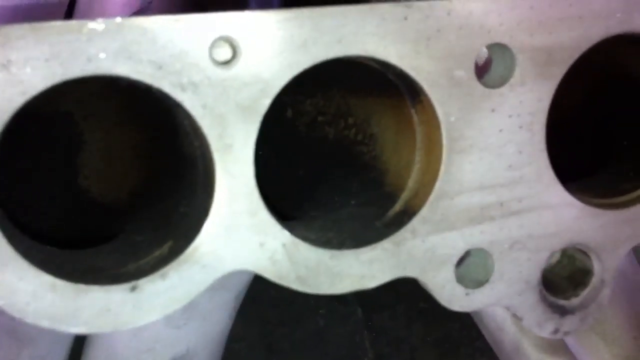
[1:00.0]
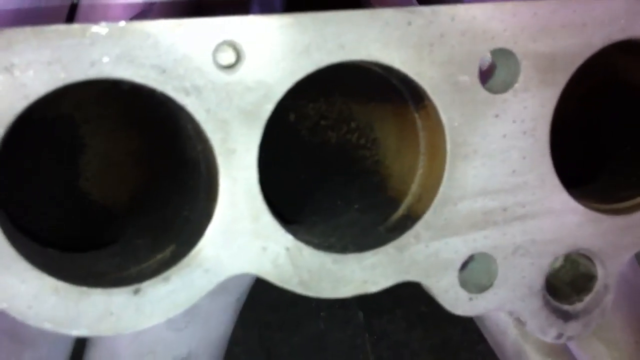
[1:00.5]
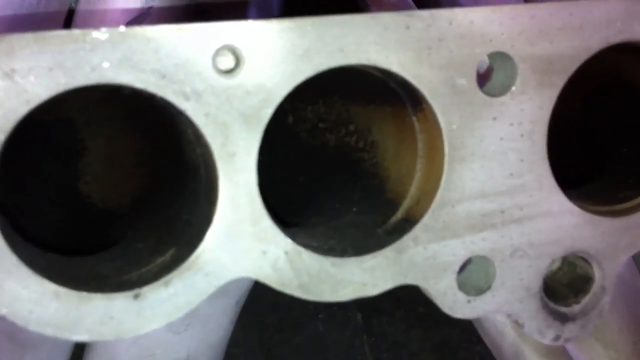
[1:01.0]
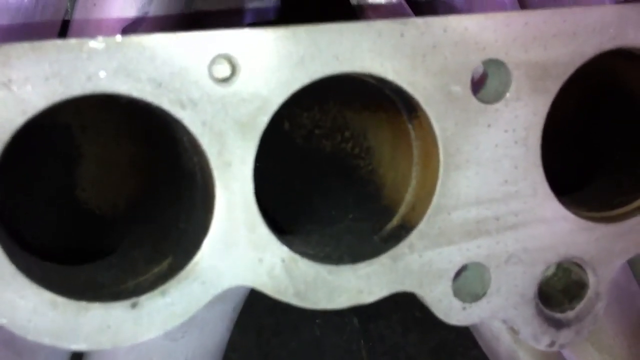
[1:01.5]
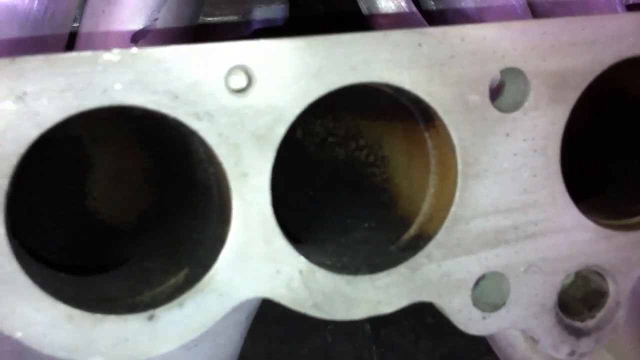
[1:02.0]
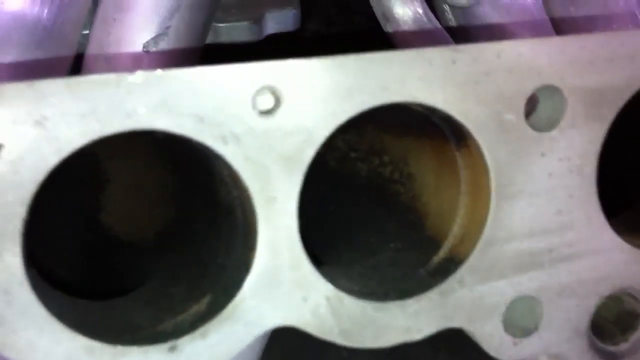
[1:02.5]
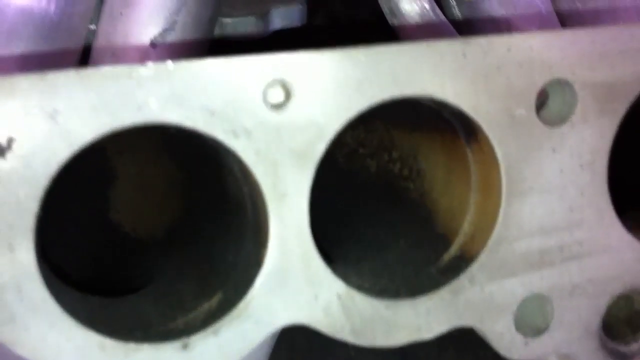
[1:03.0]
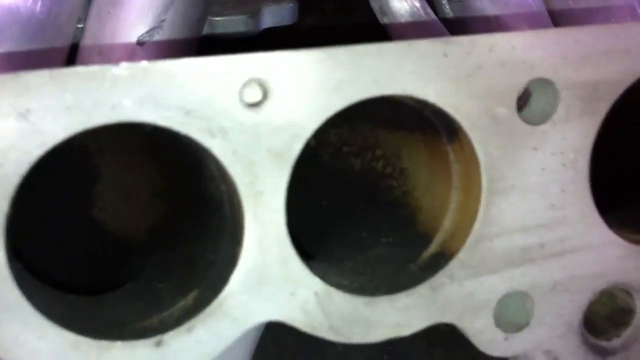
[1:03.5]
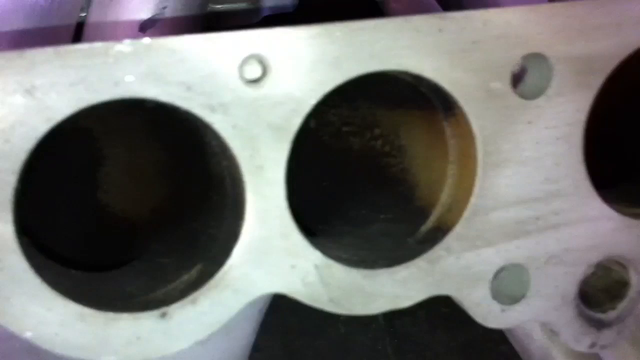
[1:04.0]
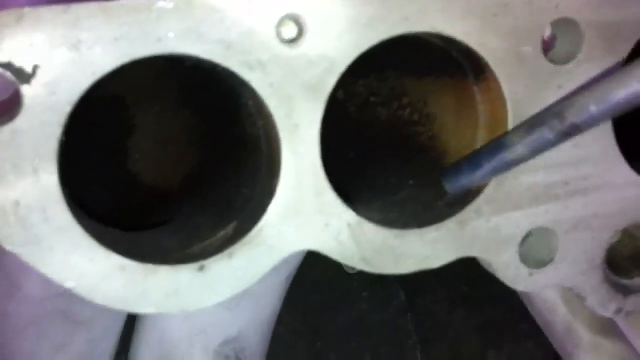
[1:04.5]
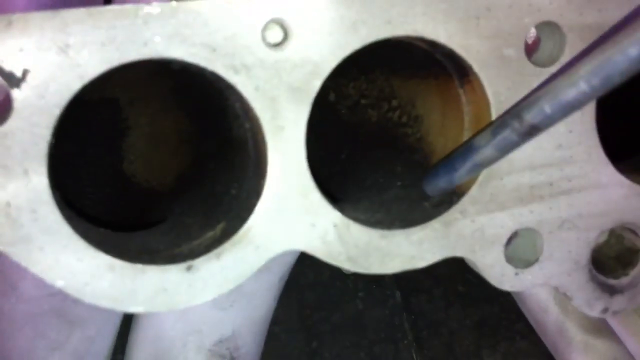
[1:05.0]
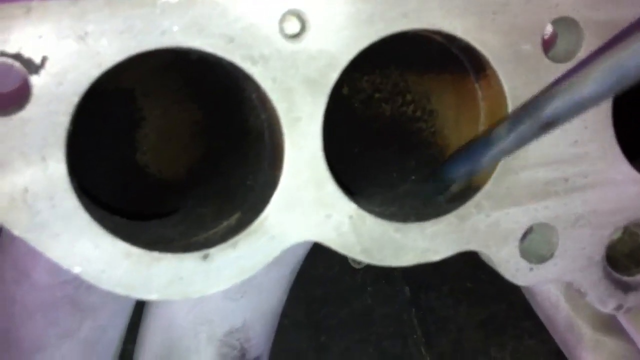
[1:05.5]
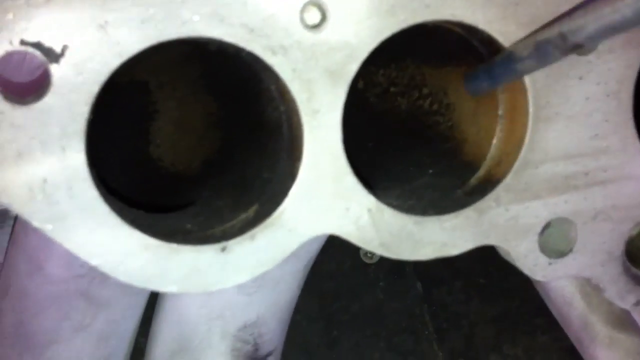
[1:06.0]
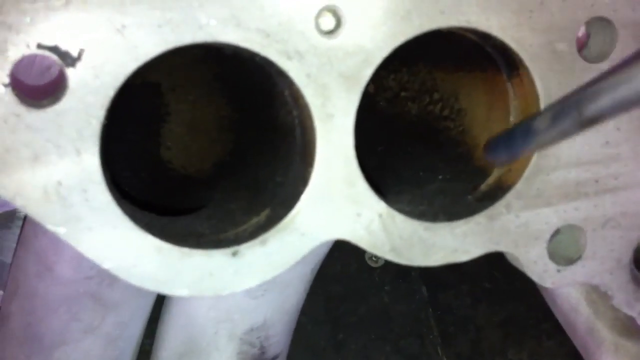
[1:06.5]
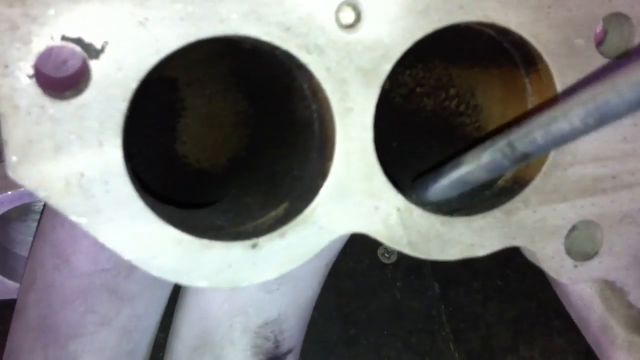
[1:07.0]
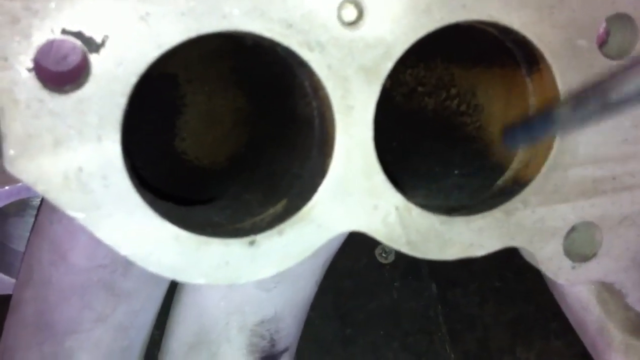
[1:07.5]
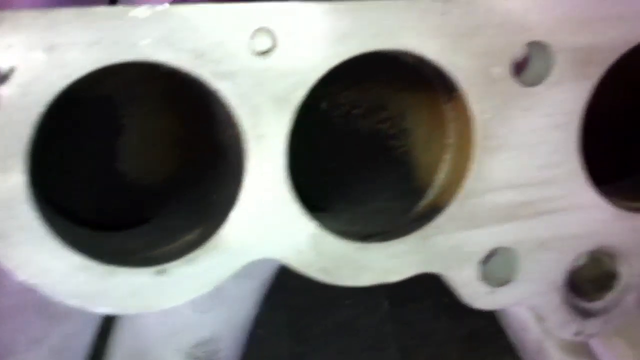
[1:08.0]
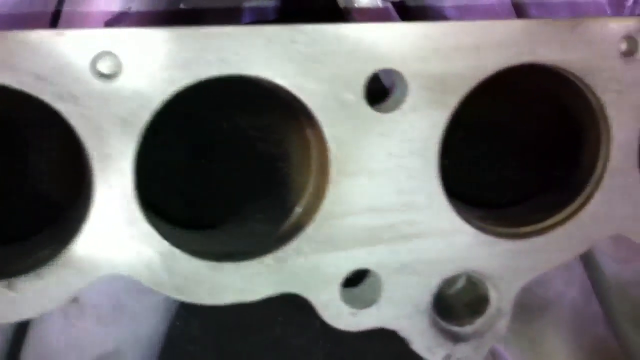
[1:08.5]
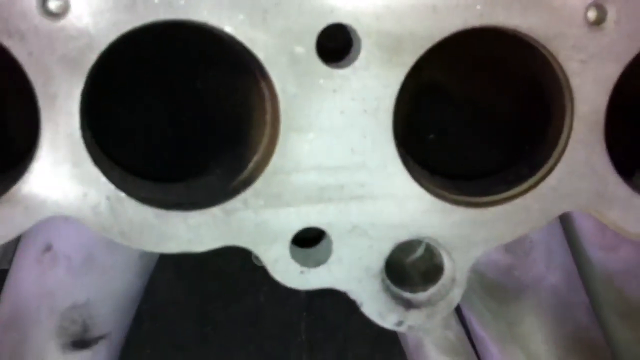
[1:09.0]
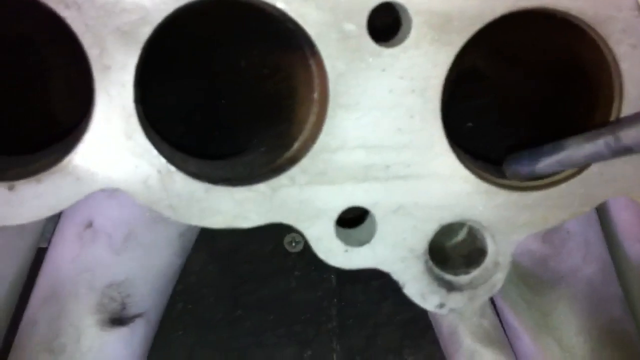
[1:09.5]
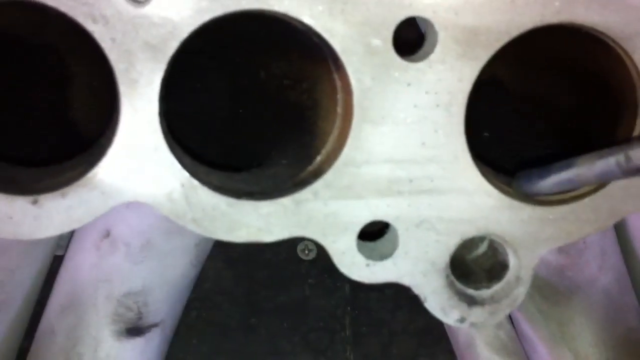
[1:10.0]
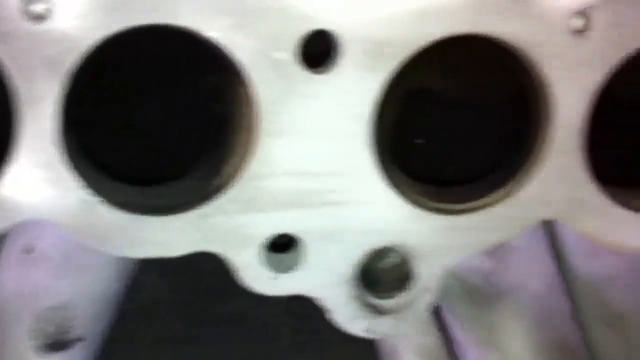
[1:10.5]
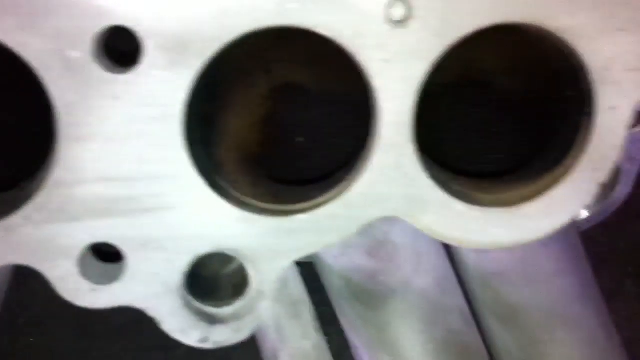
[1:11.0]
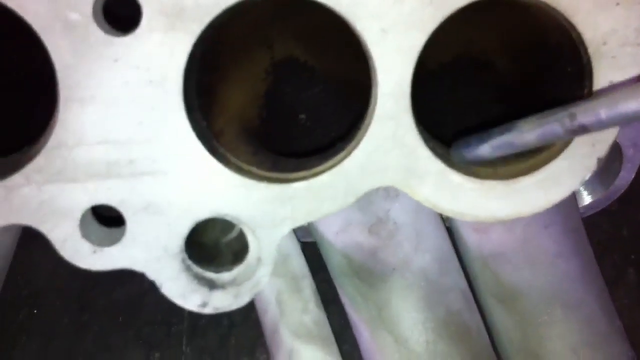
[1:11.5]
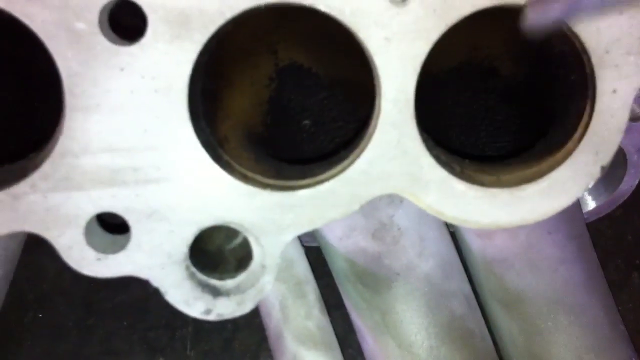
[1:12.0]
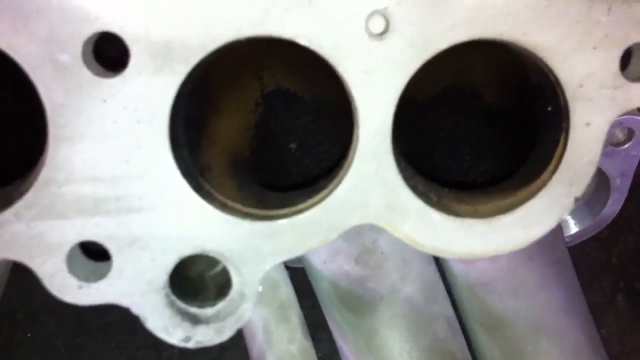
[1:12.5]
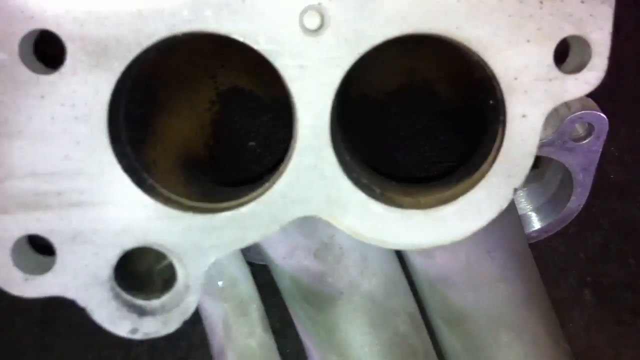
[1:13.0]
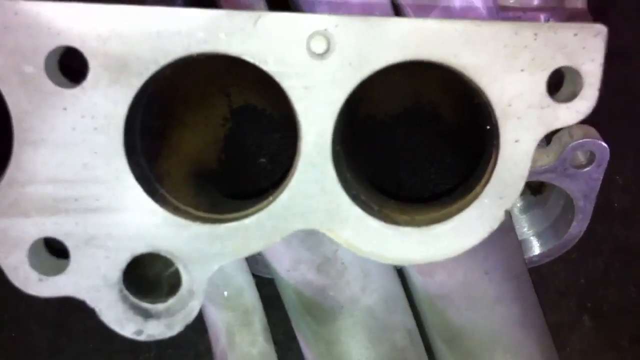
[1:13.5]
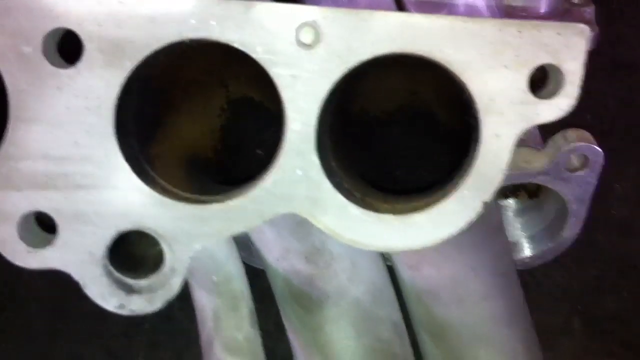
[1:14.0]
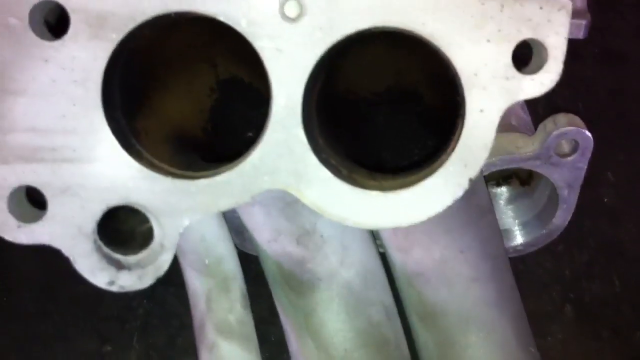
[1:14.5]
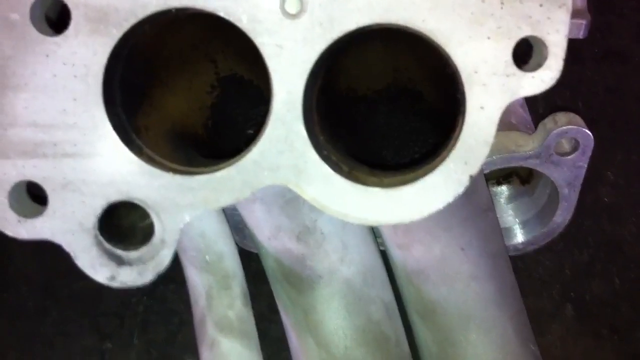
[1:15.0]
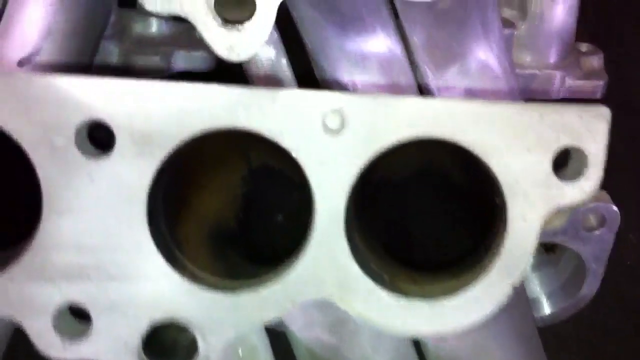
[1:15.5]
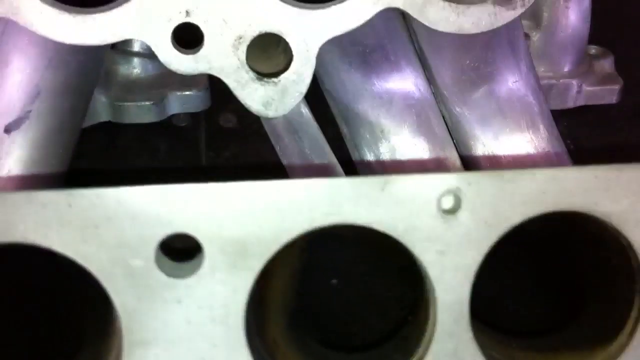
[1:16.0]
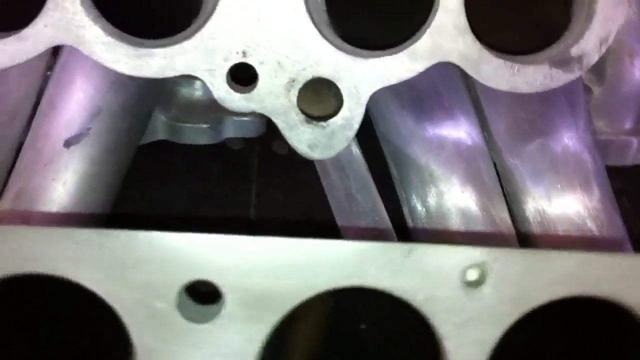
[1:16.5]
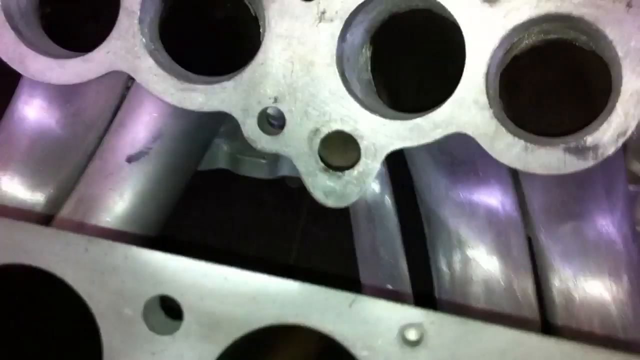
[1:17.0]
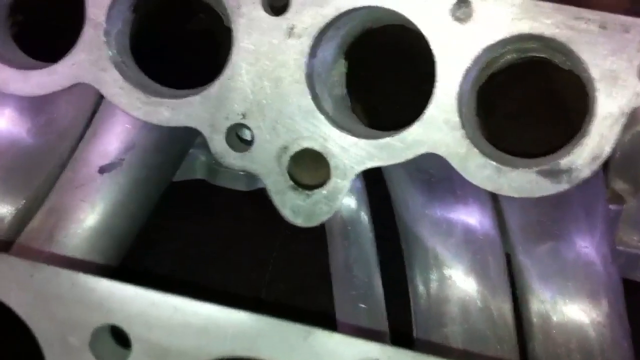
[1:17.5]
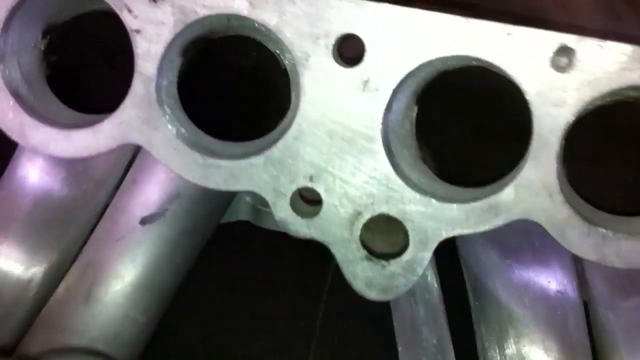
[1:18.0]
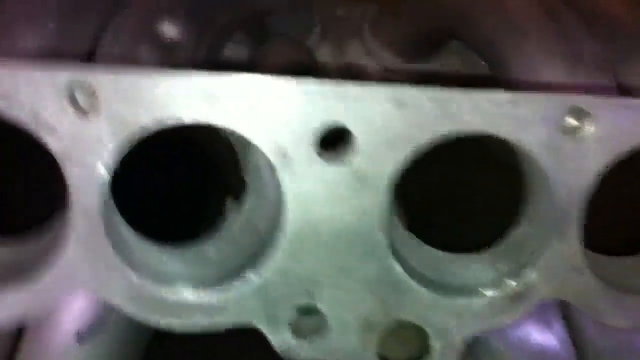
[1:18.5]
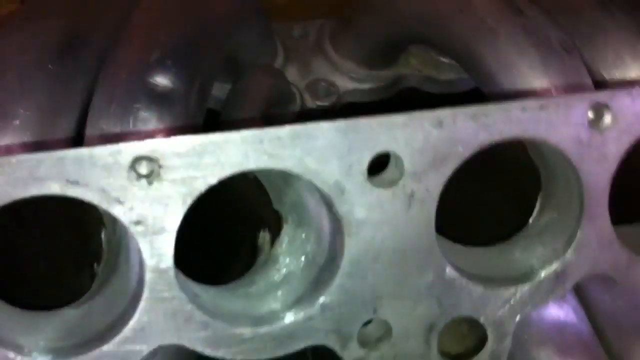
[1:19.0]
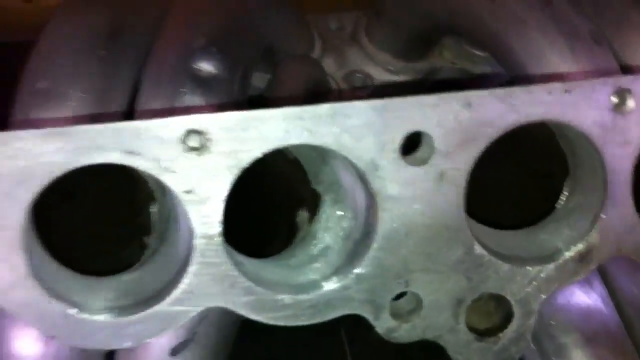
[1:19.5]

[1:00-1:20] A close-up shows plates with four very large holes. Someone sticks a metal rod briefly on the side of each hole. The holes connect to curved metal pipes, but even this close the view does not go through them; the inside of the pipes is dark and looks like it has shadings of darker colors. Each plate has small holes surrounding the four large holes. When the camera pans farther away from the holes, the pipes appear to be grouped in twos, with two going to the right side and two to the left side. Behind is another plate with the same number of holes, connecting the other end of the pipes.